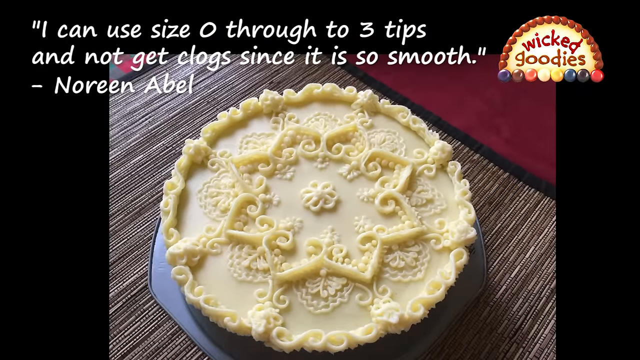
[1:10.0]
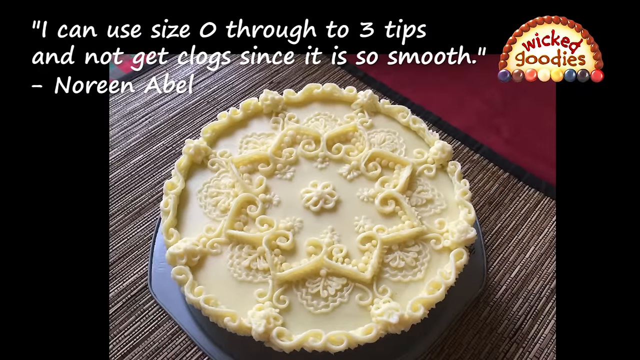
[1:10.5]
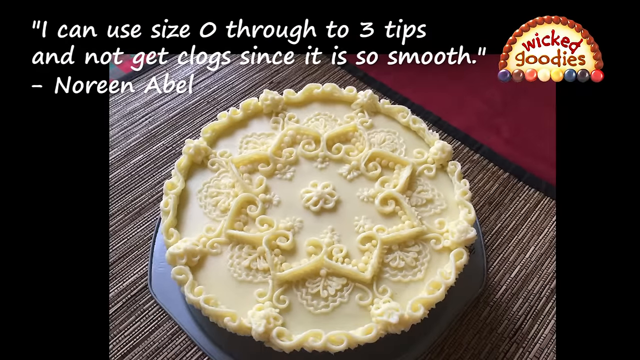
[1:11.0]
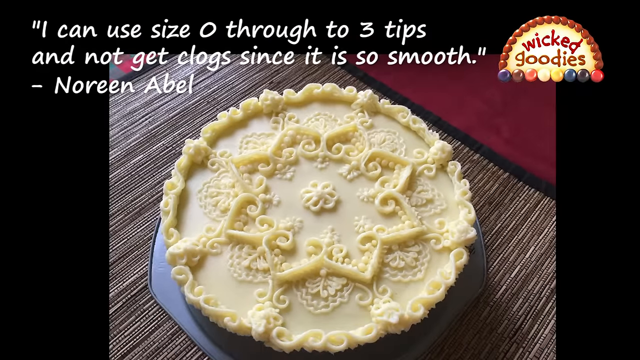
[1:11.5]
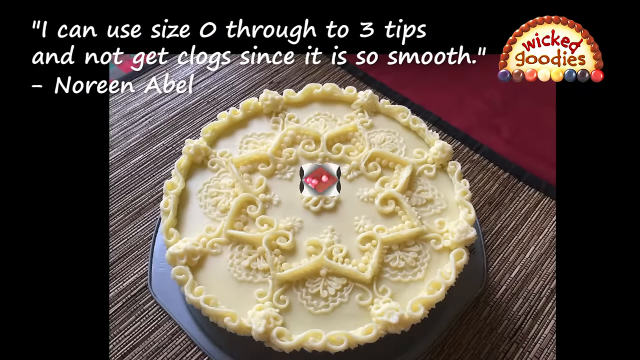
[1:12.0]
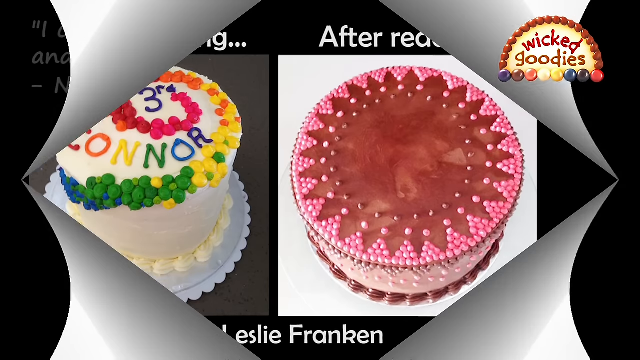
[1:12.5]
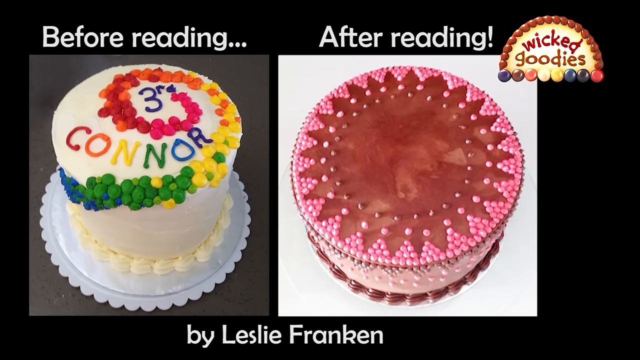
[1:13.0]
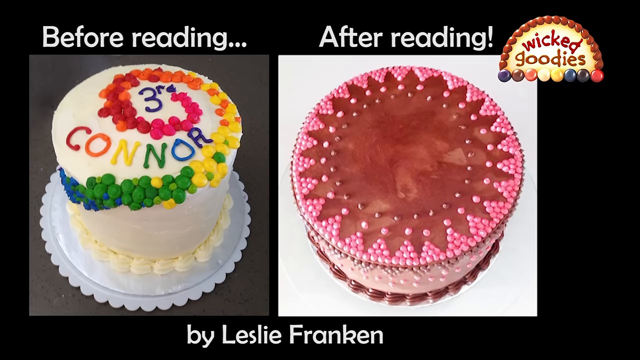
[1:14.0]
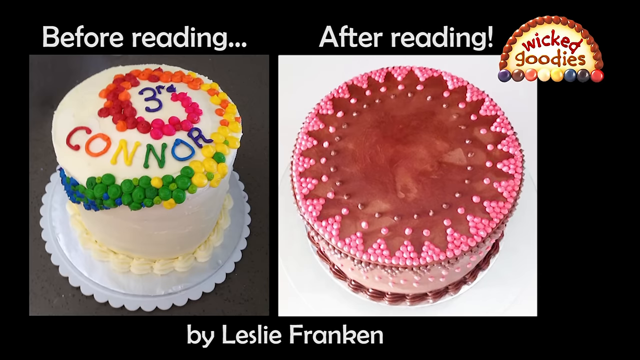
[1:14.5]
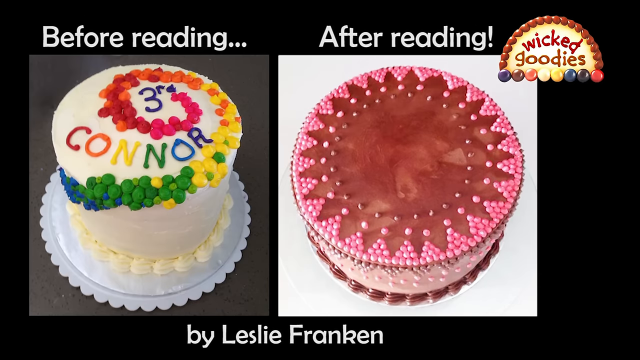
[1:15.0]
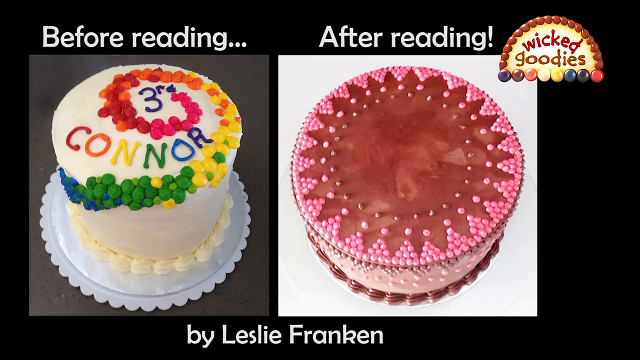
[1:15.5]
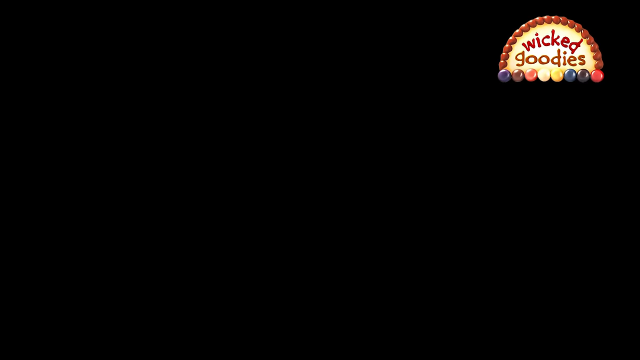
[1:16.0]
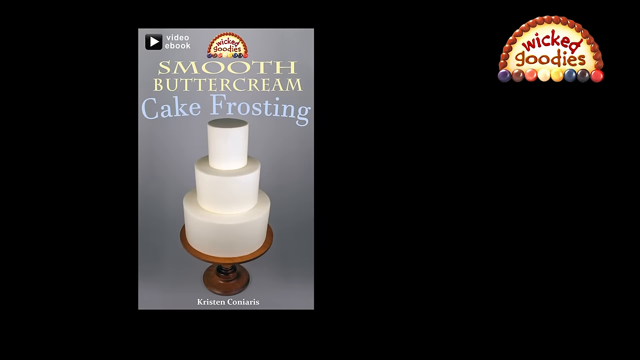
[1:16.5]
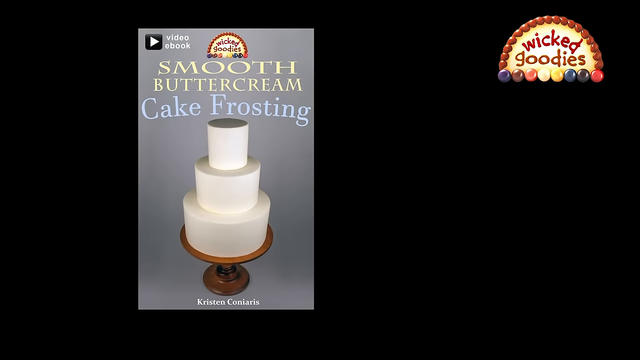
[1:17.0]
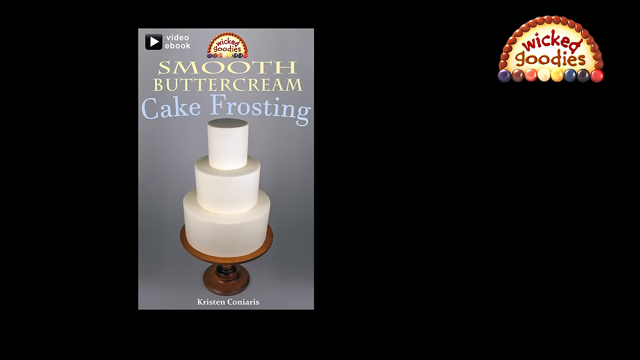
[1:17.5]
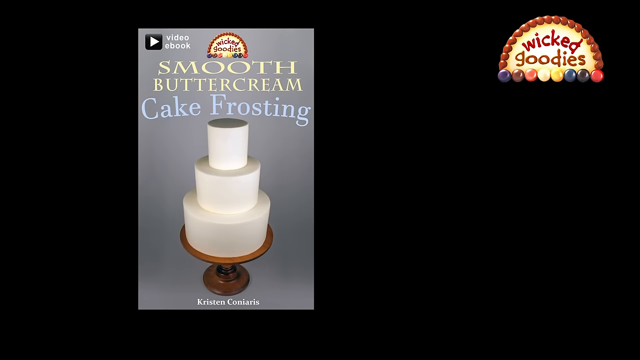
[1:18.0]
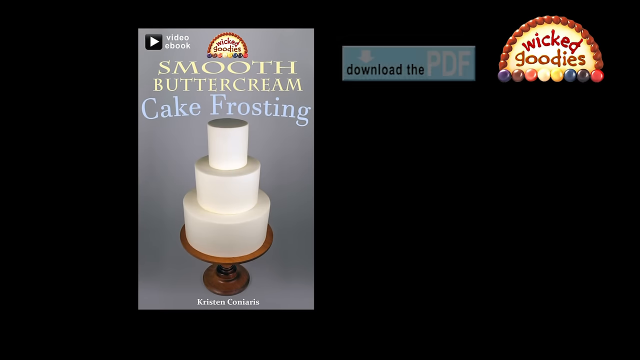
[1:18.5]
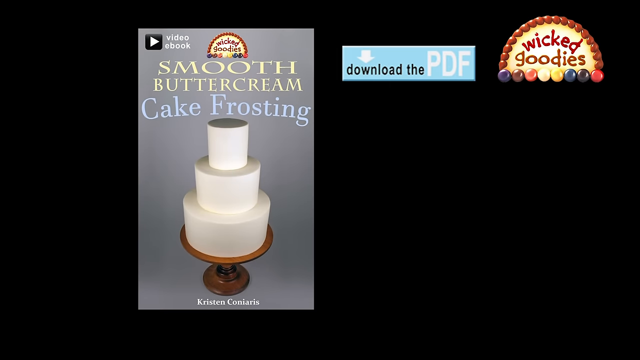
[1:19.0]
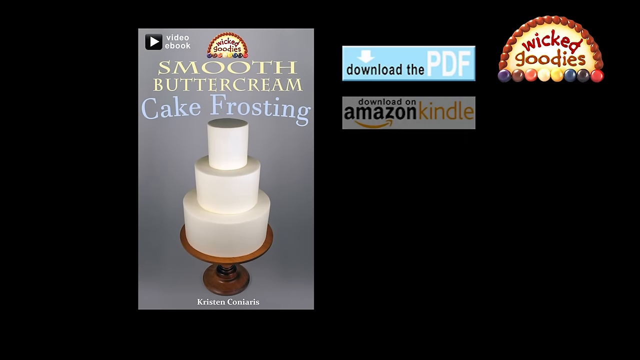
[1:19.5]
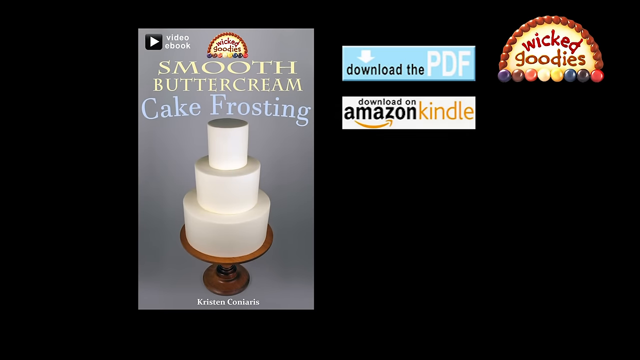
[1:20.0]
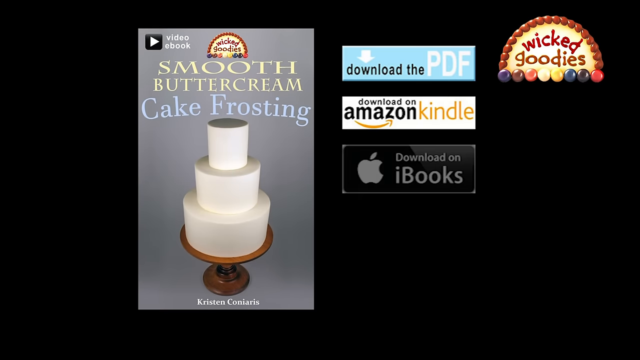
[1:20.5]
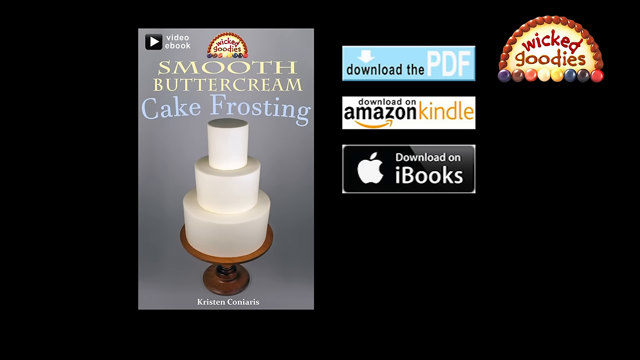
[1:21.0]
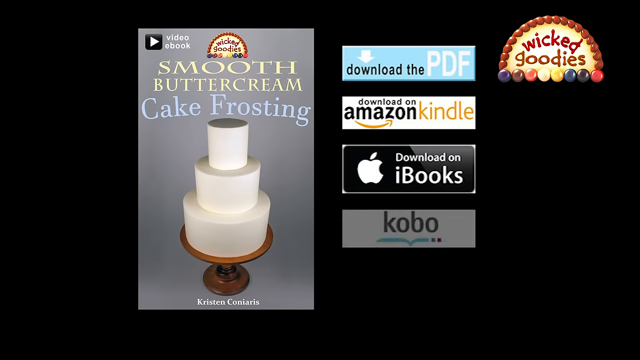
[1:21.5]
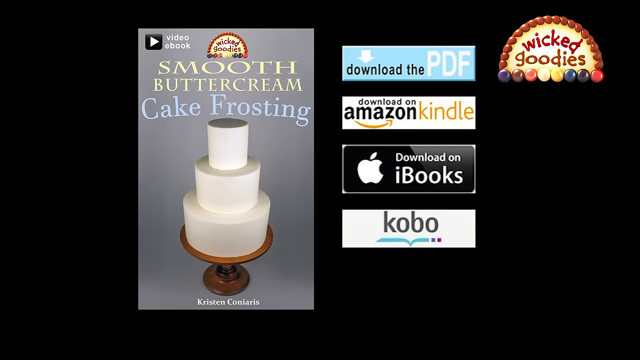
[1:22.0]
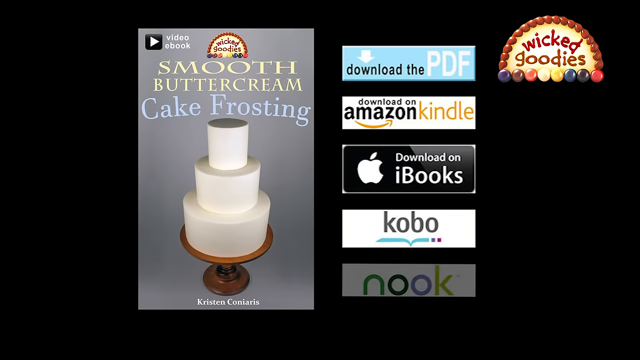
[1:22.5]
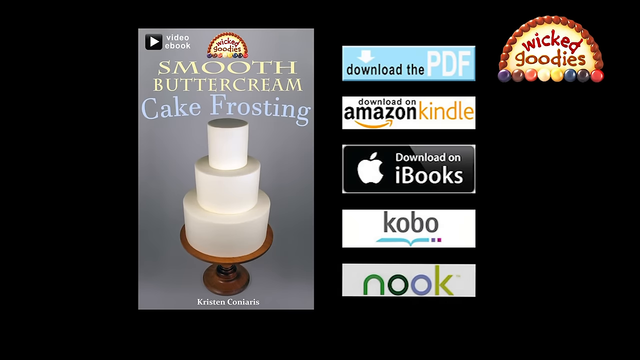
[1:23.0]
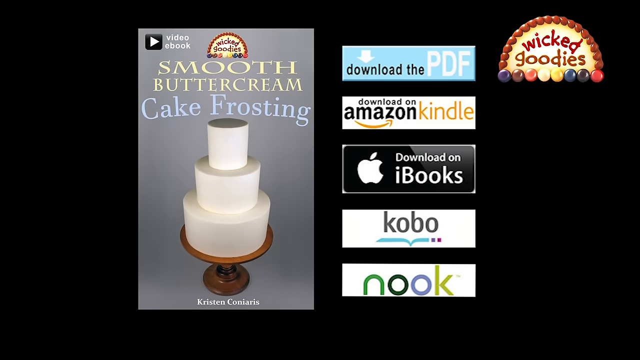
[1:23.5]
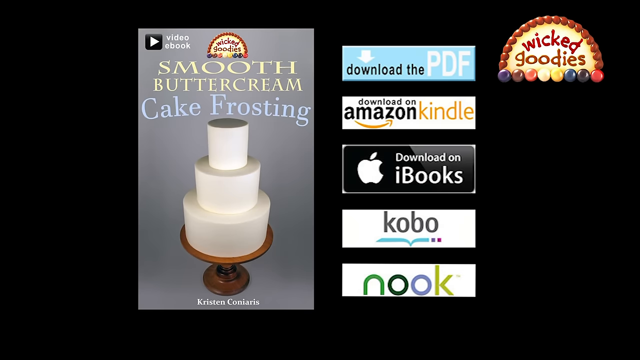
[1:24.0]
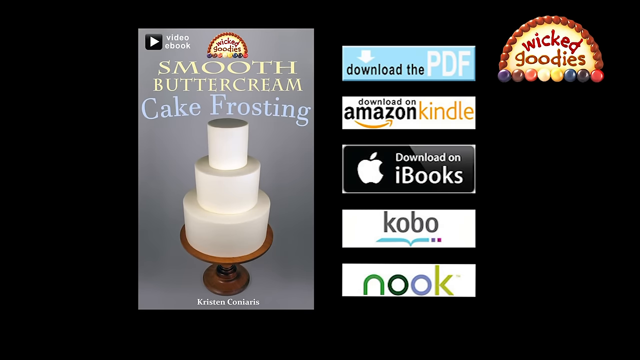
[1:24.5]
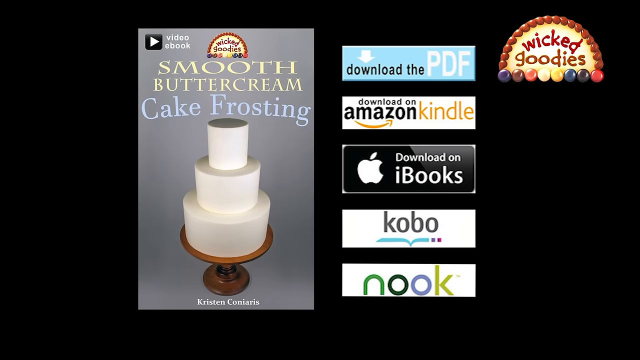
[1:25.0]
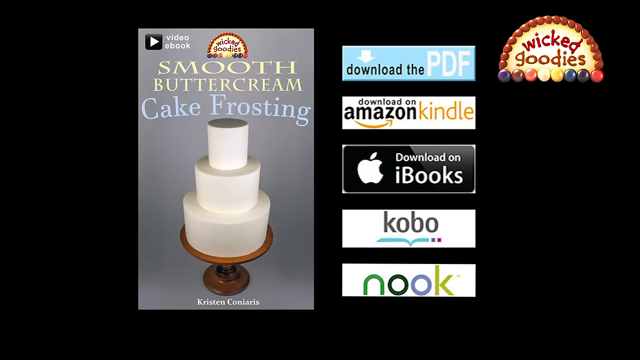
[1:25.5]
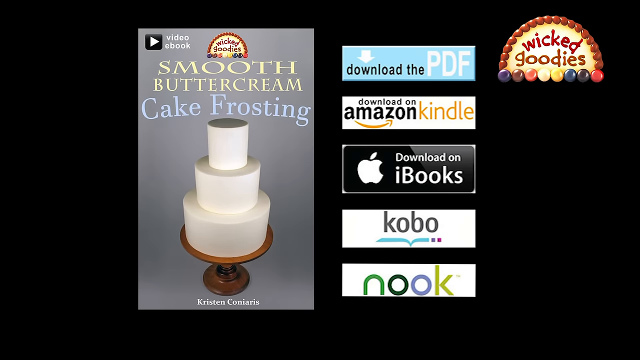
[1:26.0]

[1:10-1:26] The yellow cake is shown again, followed by images of two different round cakes. The one on the left seems to be a couple of layers high, with white frosting all over, pretty piping along the very bottom, and small dots on top that swirl into a swirl-like design; the dots seem to be different colors, cascading into a rainbow-like effect. Under the swirl is the name "Connor," written in multiple rainbow colors, and above it is the word "third," written in purple frosting, so it is probably for a birthday. Next to it is another round cake, more of a pink color, seen from overhead: the bottom is a darker pink, the middle area is light pink with very detailed light pink dots, and the very top has pink triangles made from very small pink dots. This is presented as a before and after from someone named Lesley Franklin: the cake on the left is from before she read about creating this kind of cake, and the other is what she made afterward. Finally, "smooth buttercream cake frosting" appears with a three-tier cake, along with options to download the PDF or download on Amazon Kindle, iBooks, Kobo or Nook.